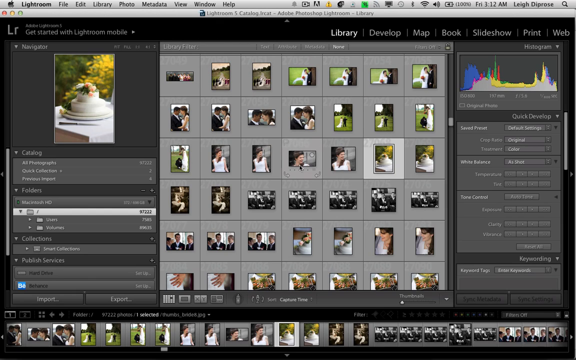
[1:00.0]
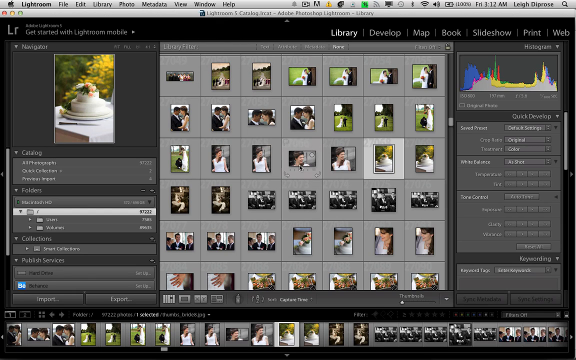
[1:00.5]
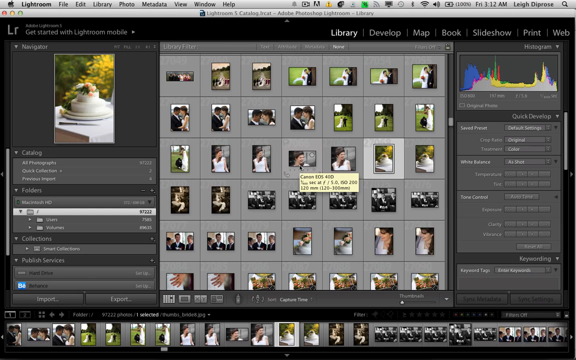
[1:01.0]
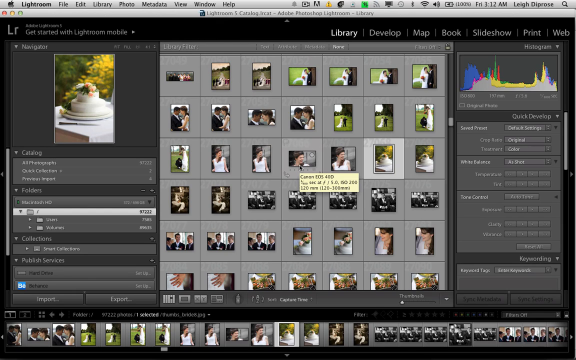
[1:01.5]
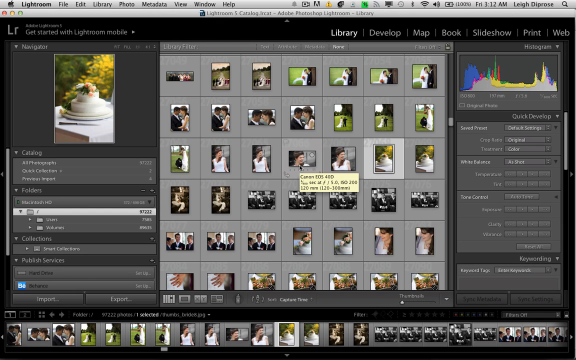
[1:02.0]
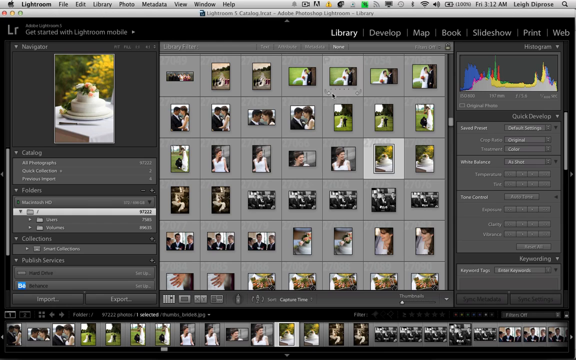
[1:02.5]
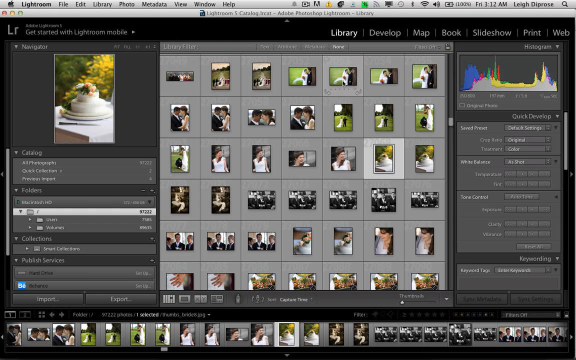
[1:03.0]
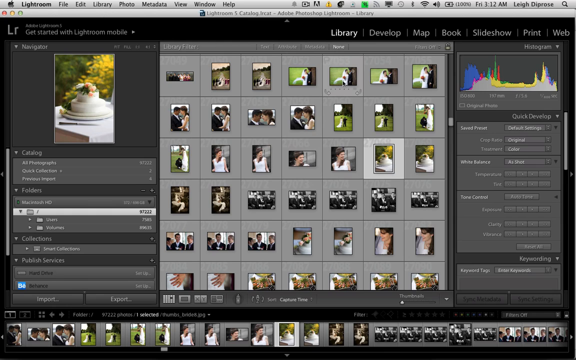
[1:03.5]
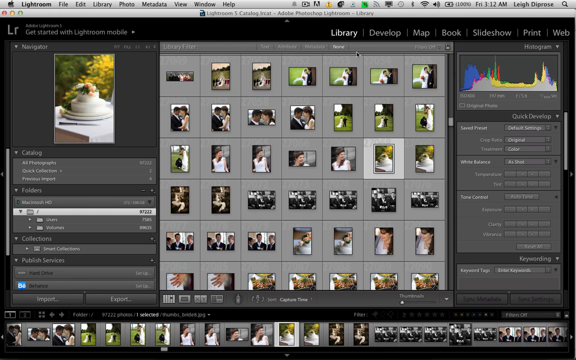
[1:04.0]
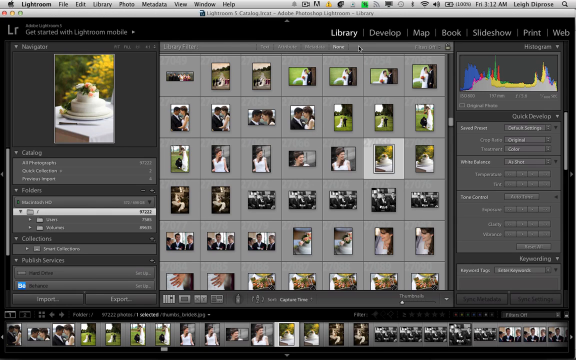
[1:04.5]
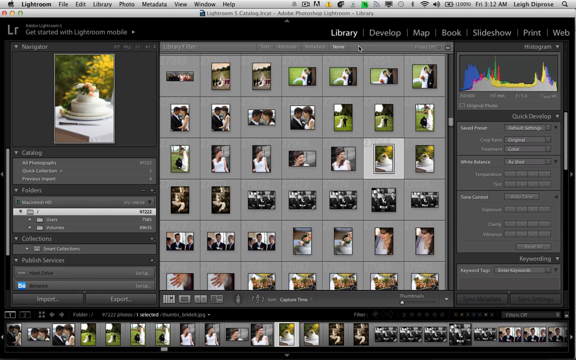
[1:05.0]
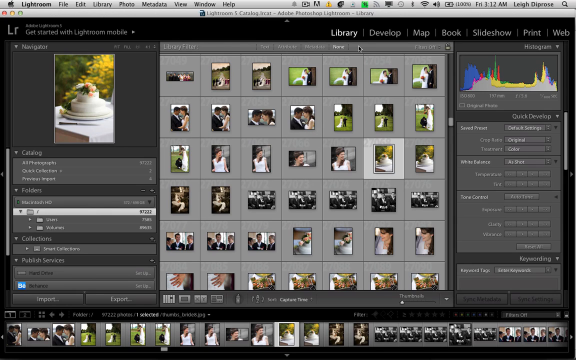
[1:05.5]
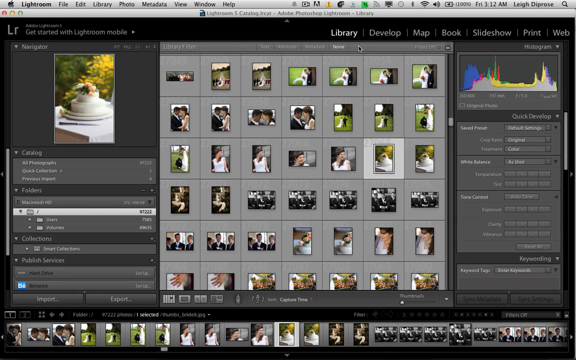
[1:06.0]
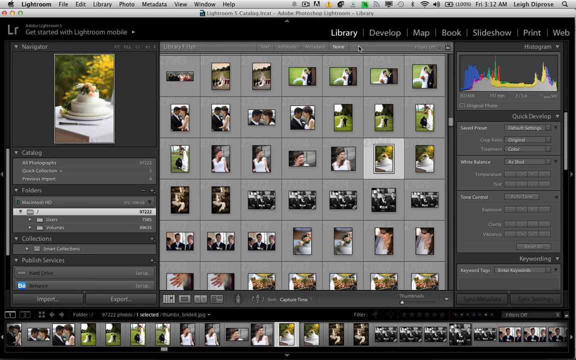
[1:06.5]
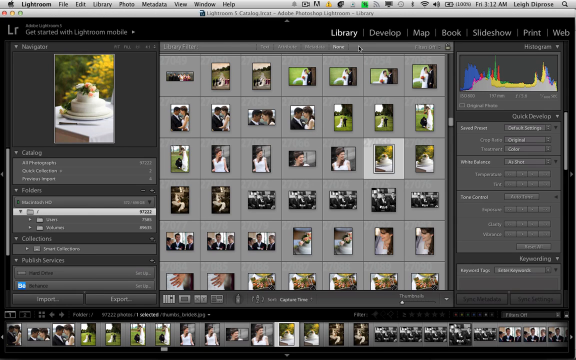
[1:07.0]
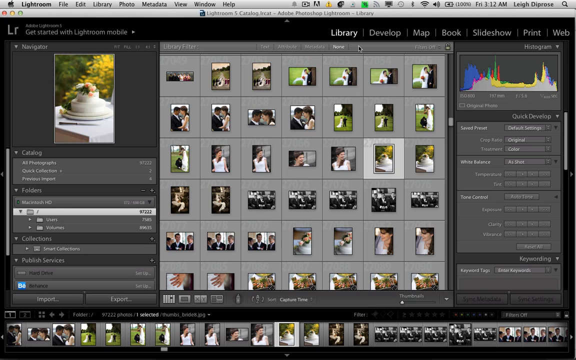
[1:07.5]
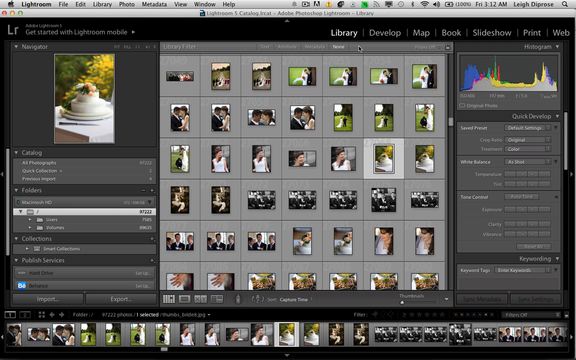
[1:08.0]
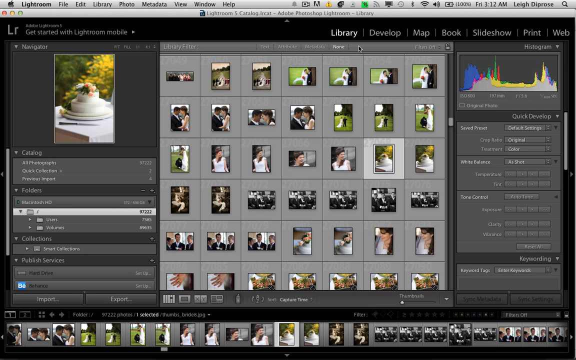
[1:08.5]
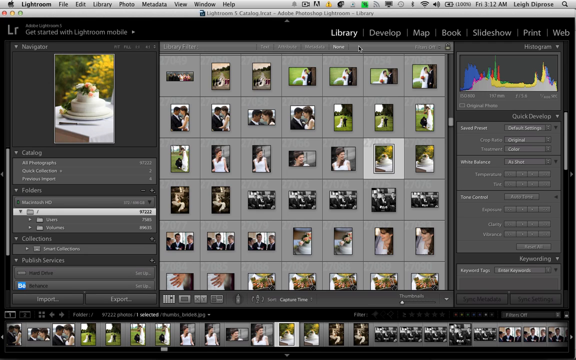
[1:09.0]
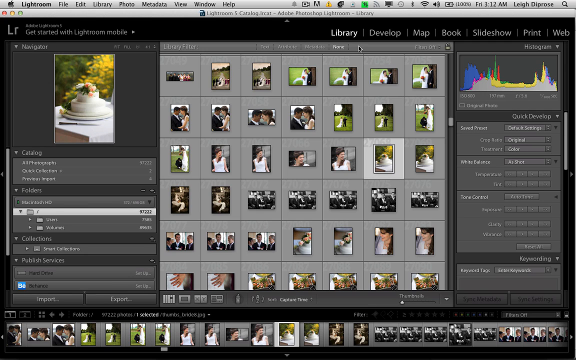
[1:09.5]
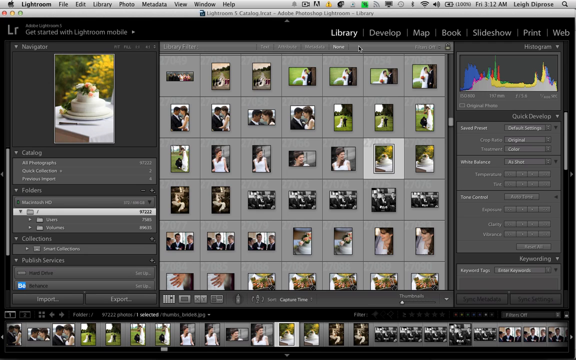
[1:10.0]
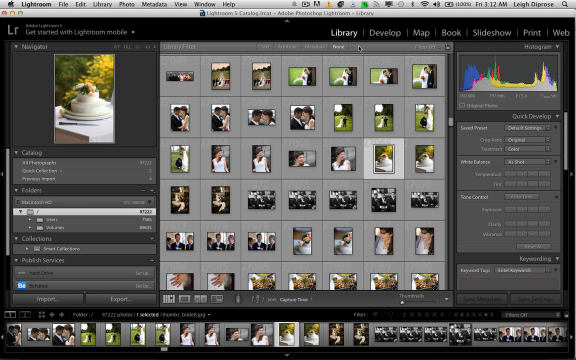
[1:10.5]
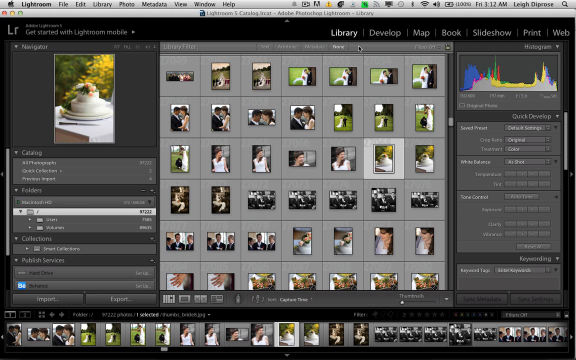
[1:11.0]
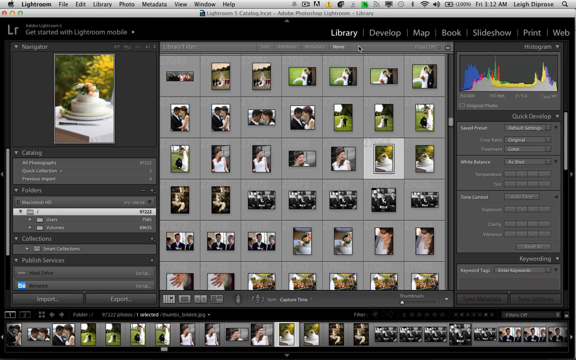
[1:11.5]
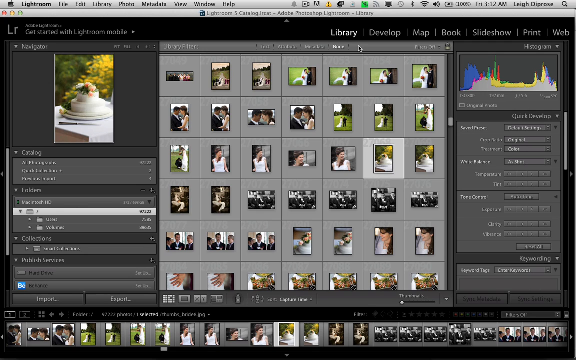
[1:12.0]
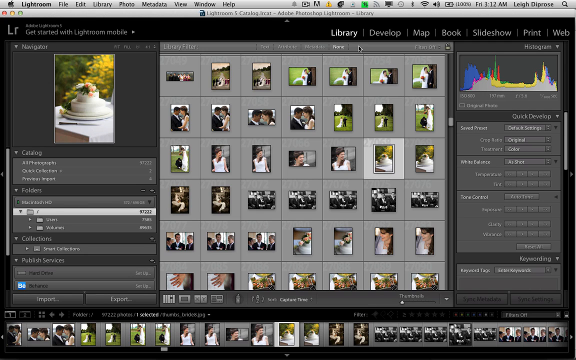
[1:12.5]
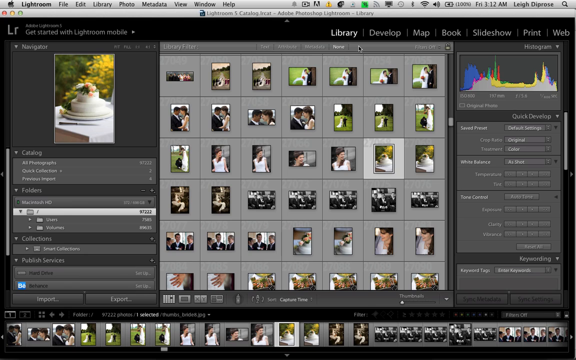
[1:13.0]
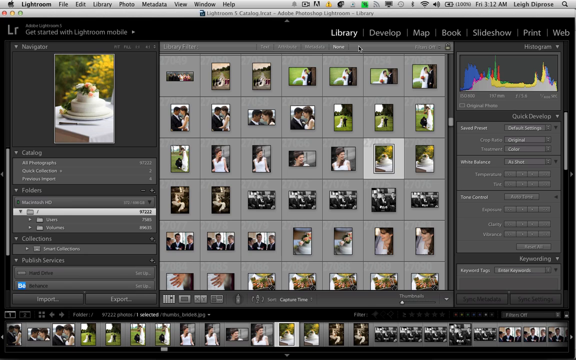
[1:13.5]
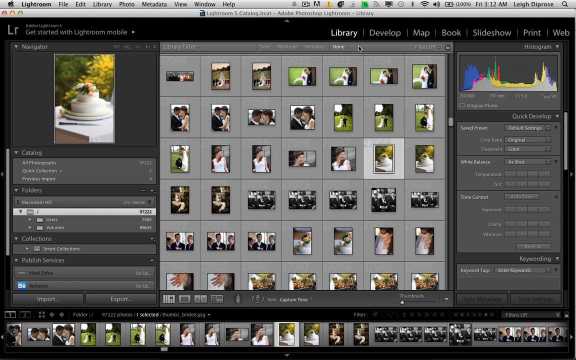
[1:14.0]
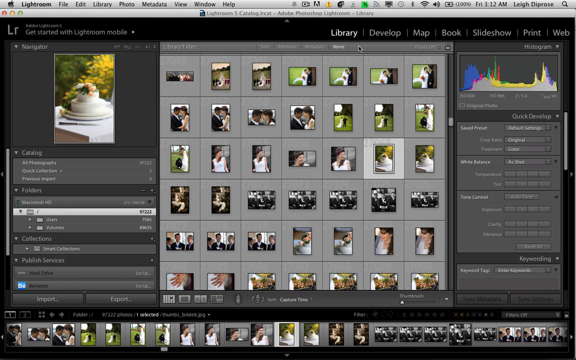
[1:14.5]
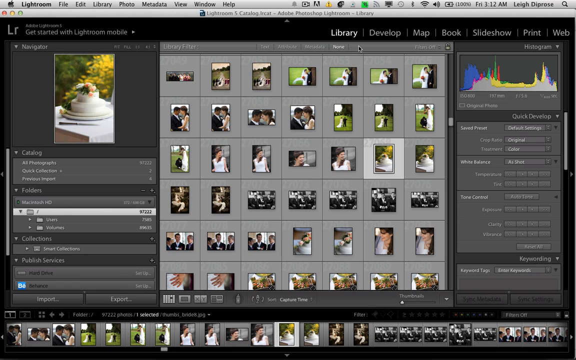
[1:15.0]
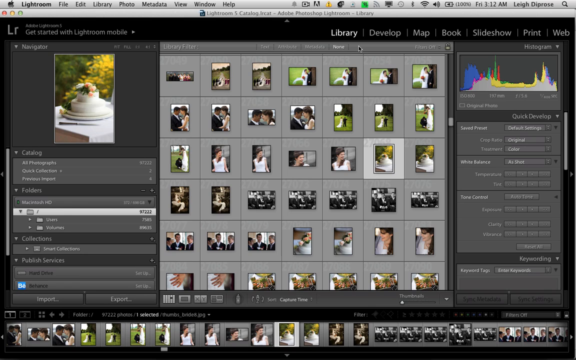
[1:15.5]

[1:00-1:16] Pictures of what looks like a wedding are shown while someone clicks through them, seemingly grouping or deleting them. The pictures were taken in a garden with a green lawn in the background on a sunny day, and they are colorful. There are girls, guests, friends and family. A two-layer cake has yellow flowers on it. The groom and his groomsmen wear black suits, and the bride wears a white gown and holds red flowers.